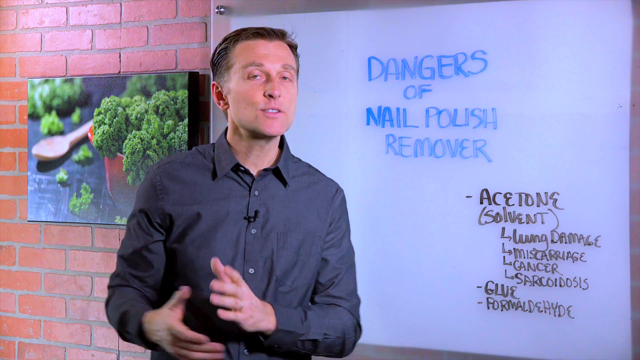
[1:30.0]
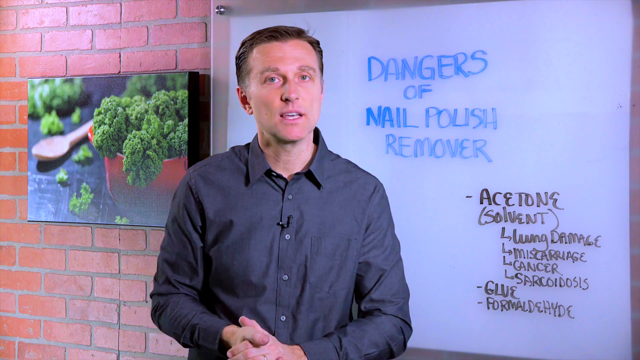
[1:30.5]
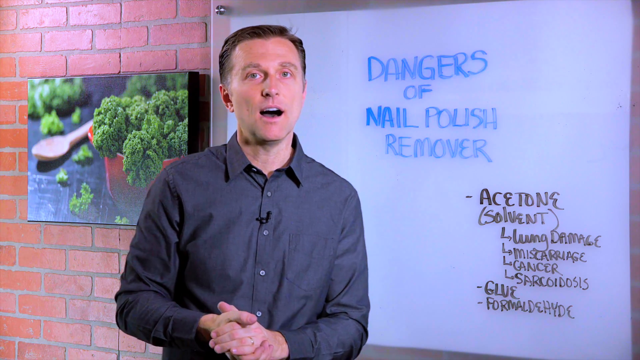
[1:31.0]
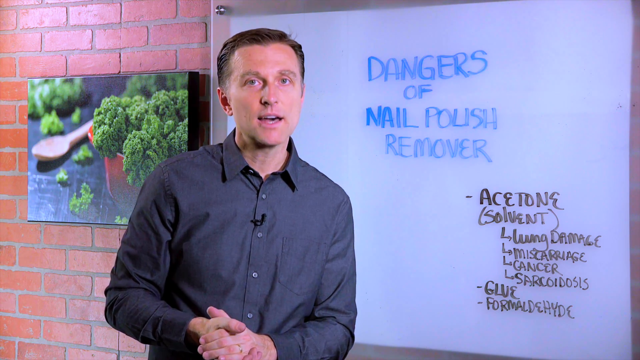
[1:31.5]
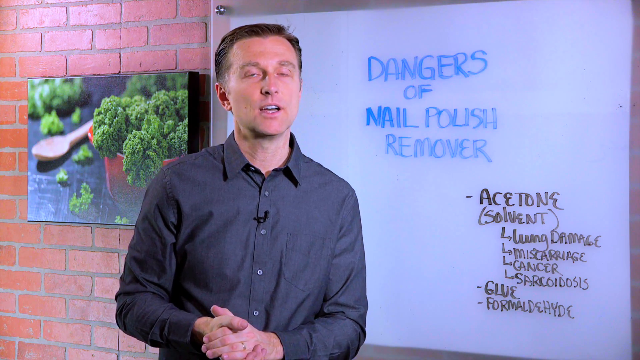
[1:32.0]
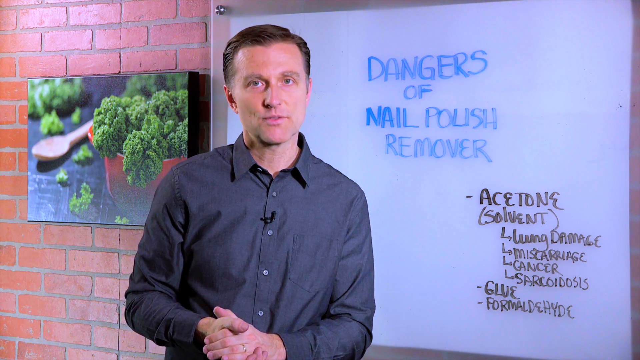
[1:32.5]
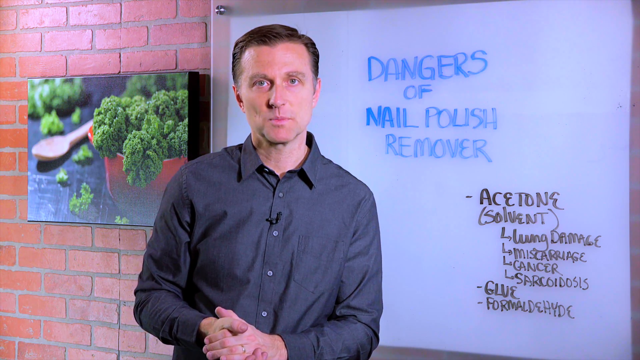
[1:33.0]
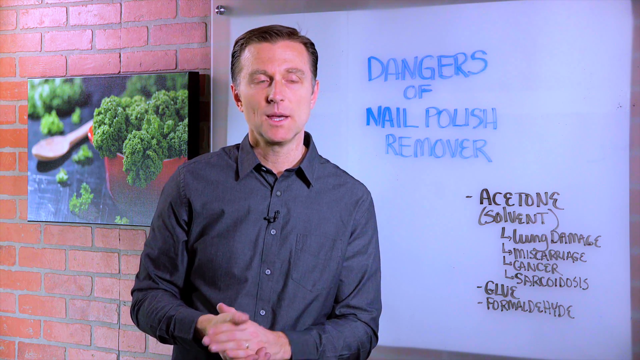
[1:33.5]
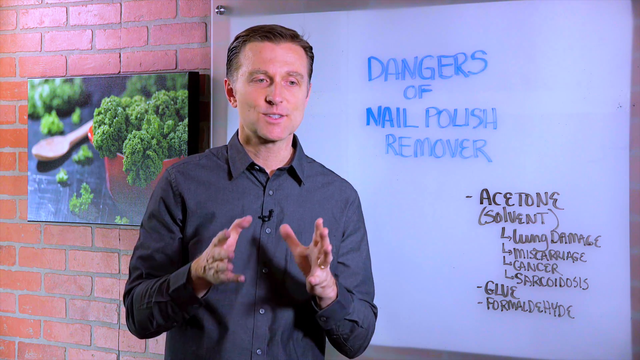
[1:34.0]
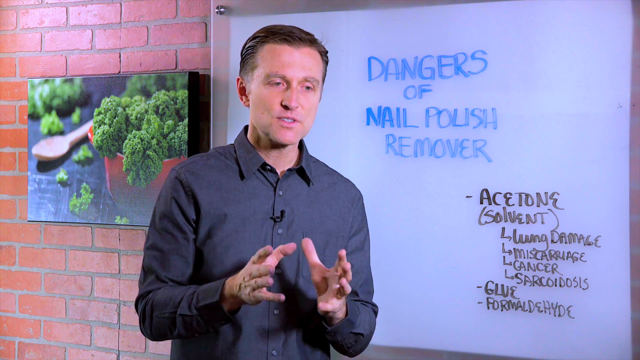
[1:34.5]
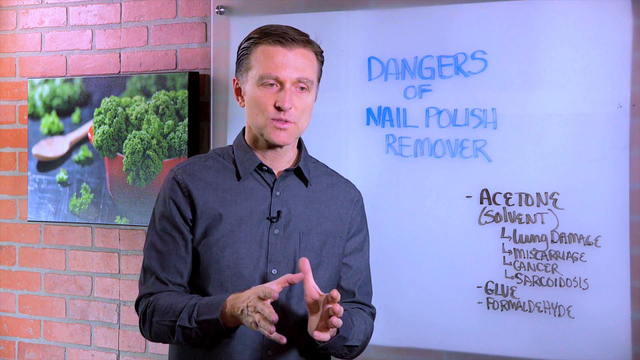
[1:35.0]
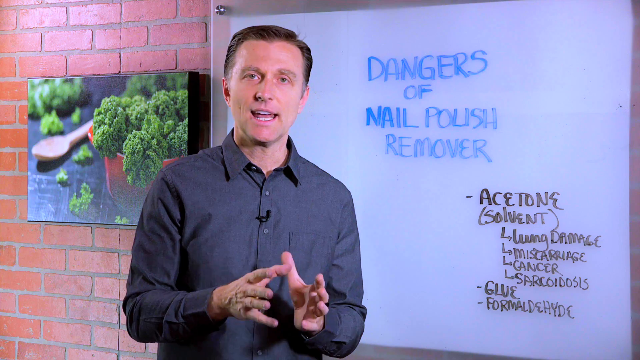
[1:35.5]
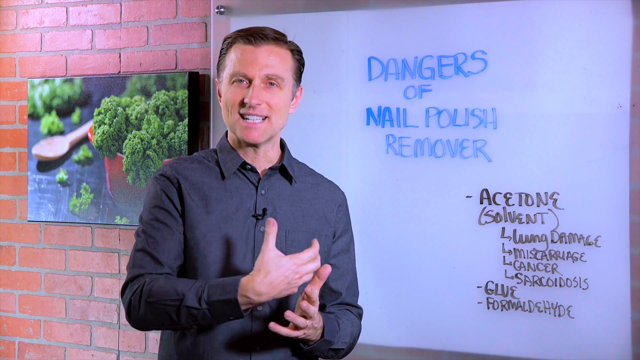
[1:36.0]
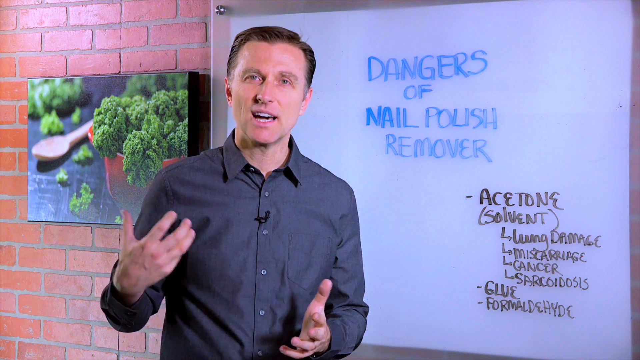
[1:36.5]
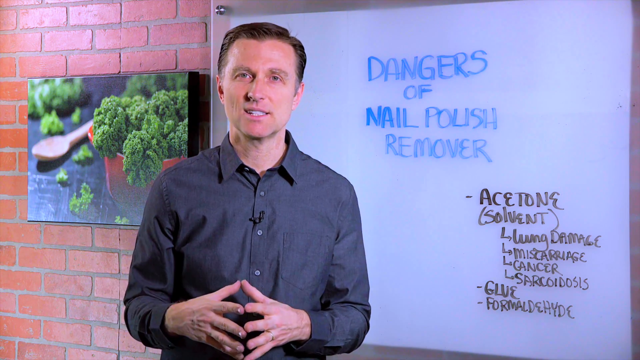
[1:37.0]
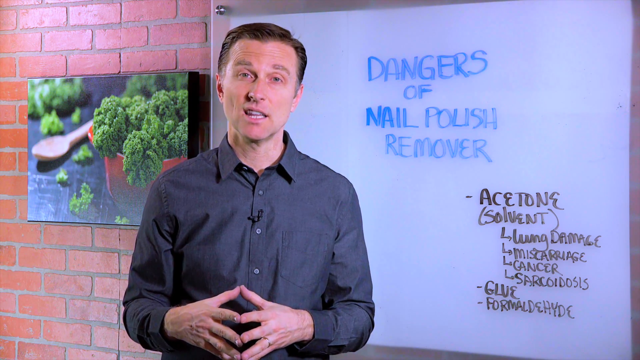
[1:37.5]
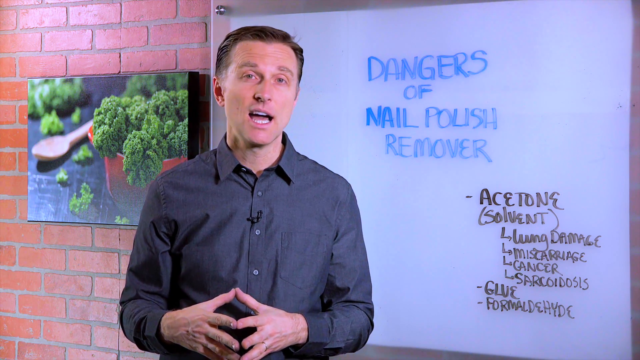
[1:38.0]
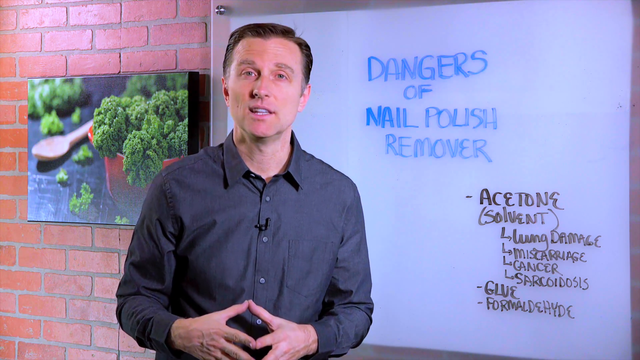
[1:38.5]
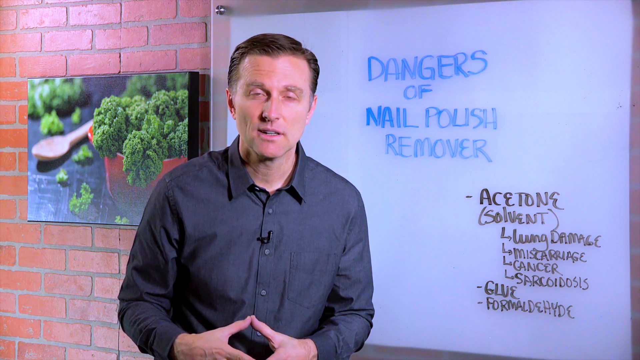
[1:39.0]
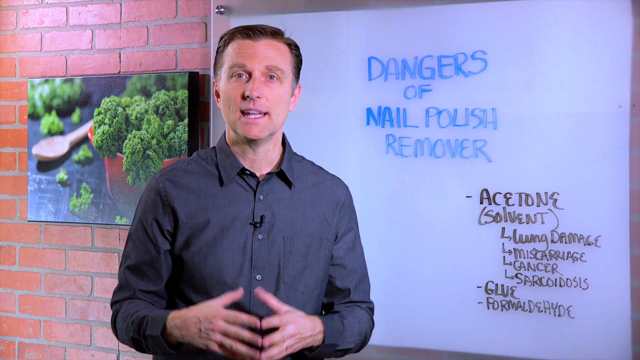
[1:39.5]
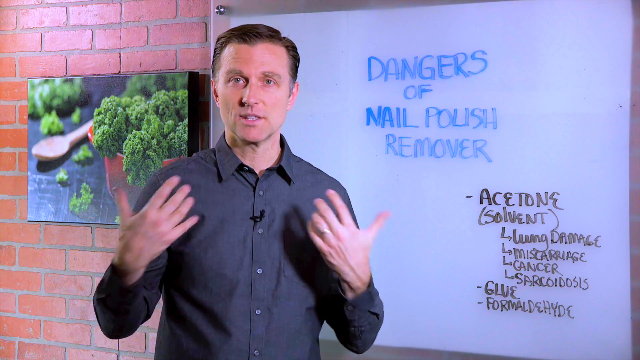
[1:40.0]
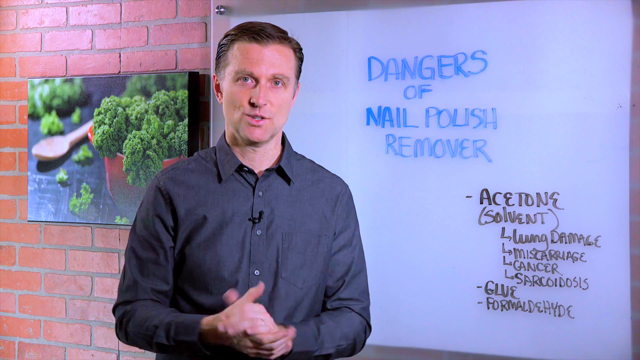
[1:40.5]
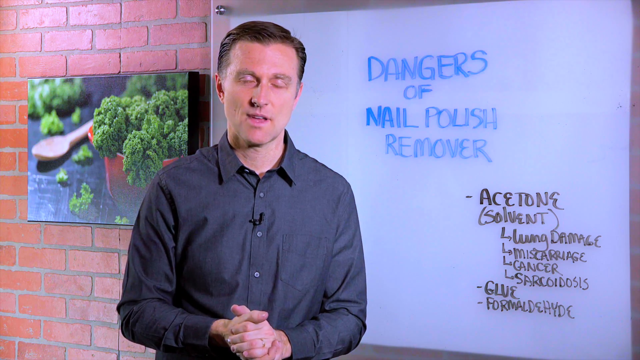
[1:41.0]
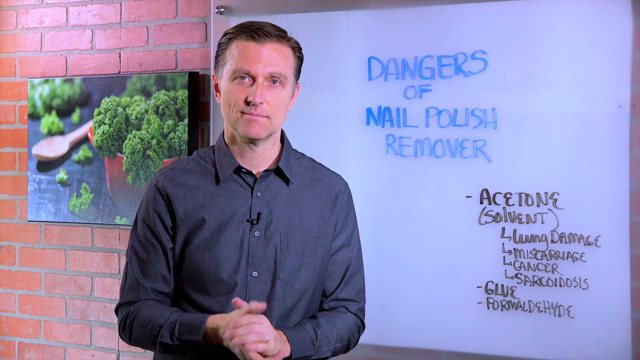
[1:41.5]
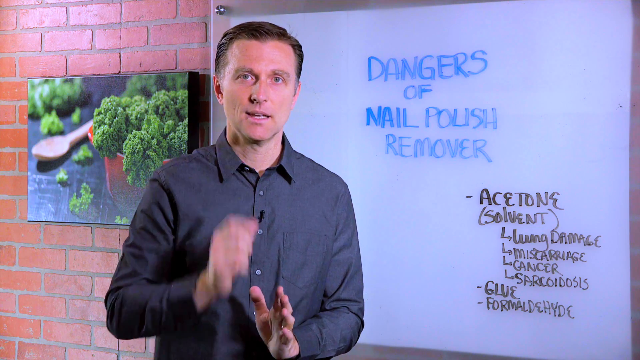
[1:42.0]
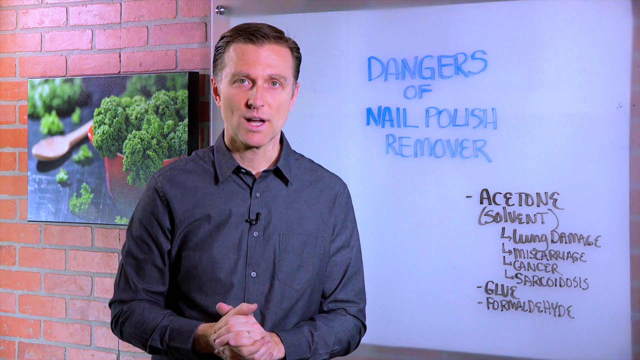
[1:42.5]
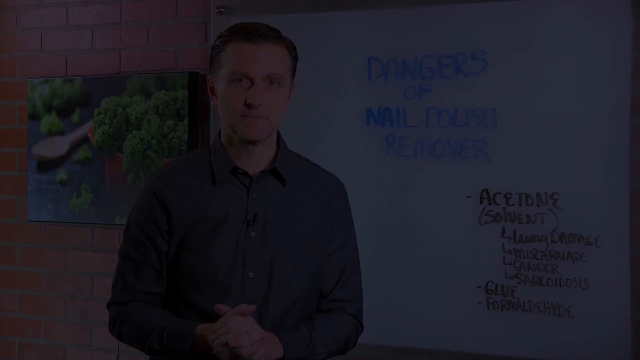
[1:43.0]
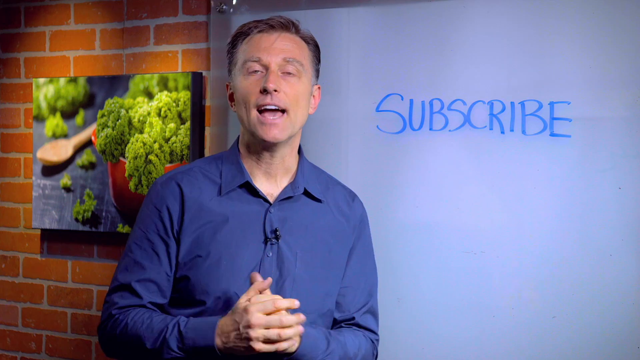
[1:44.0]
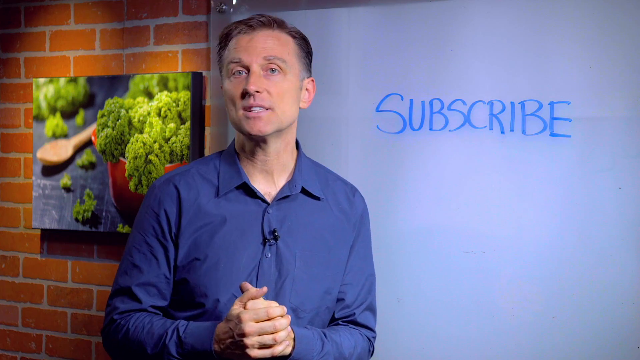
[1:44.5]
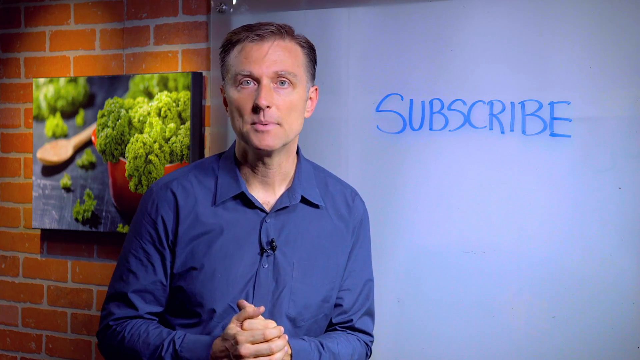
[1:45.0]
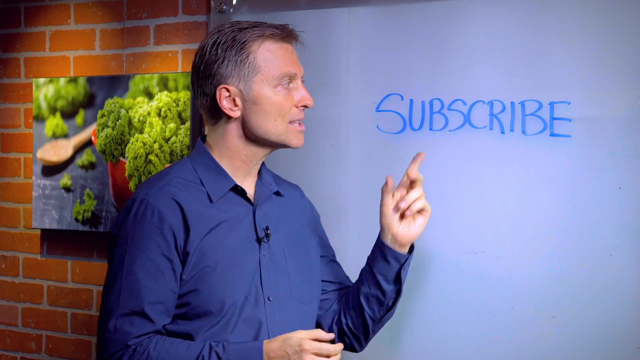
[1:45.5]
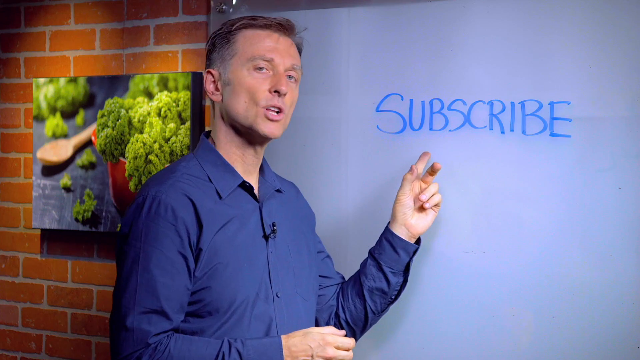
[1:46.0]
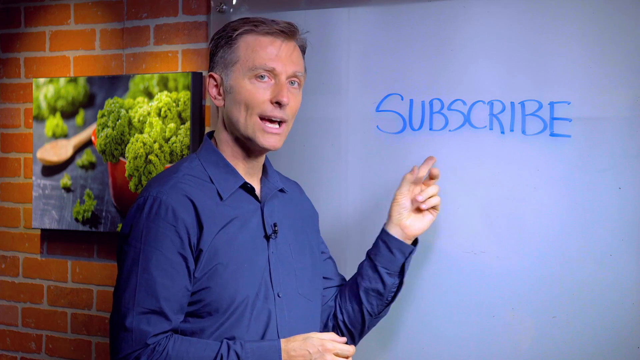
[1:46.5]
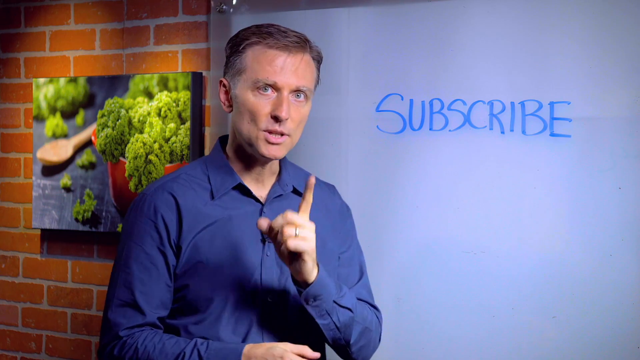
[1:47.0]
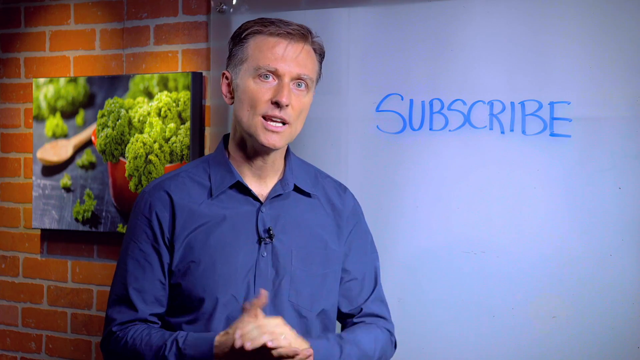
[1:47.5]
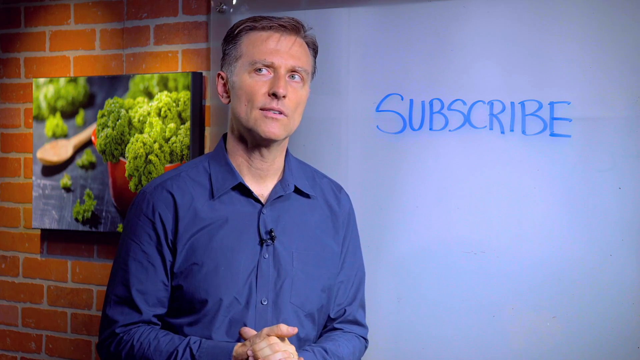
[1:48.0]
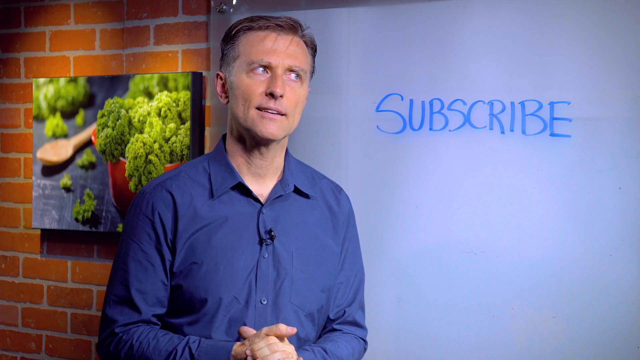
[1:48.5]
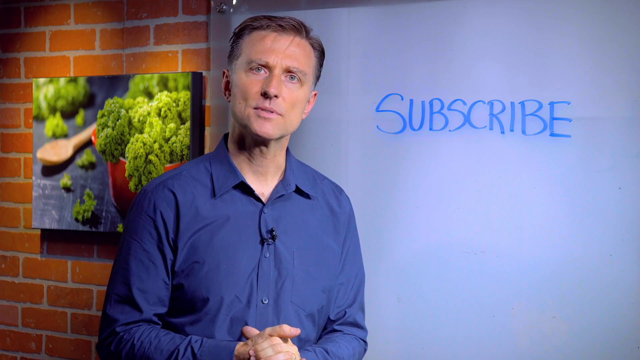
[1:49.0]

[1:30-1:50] The same gentleman keeps talking. A black microphone is pinned just under the second button from the top of his shirt, and the top button is undone. At times a gold ring is visible on his finger. The video then transitions to a new screen. There appear to be some lights on the broccoli image hanging on the brick wall: a couple of spotlights, though only the light they give off is visible. The room is a little darker. The acrylic erase board, with silver offsets, says "SUBSCRIBE" in blue, all capital letters. The painting of the broccoli is sharp; it almost looks like a mirror, with the front part of the broccoli in the red bowl popping out and the back a little blurry, almost like a mirror view.